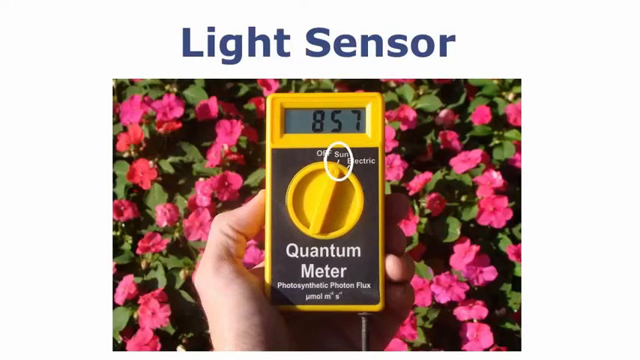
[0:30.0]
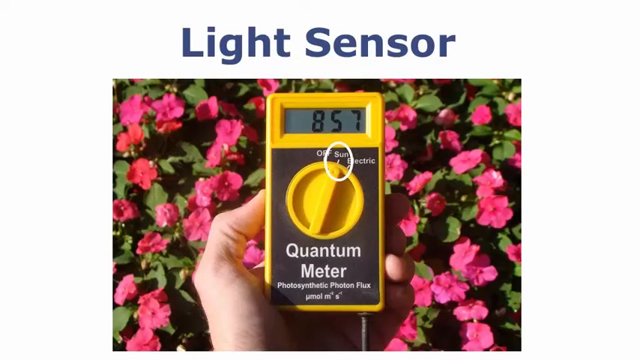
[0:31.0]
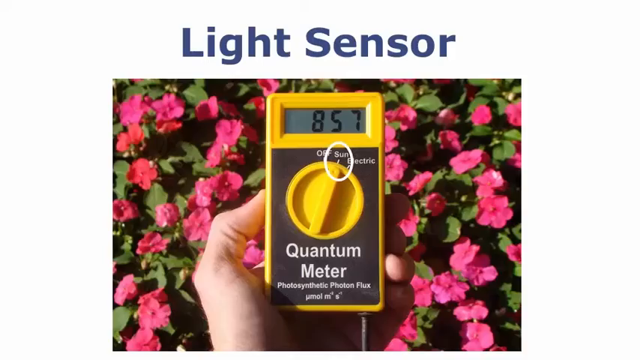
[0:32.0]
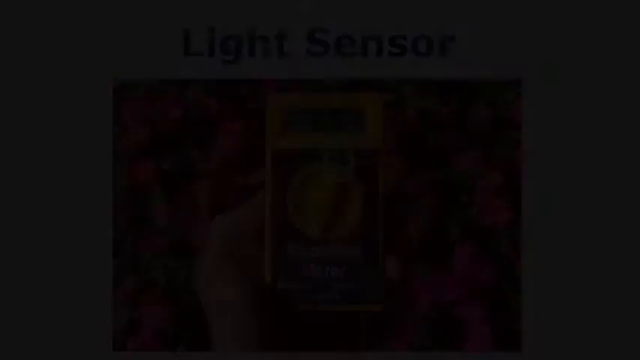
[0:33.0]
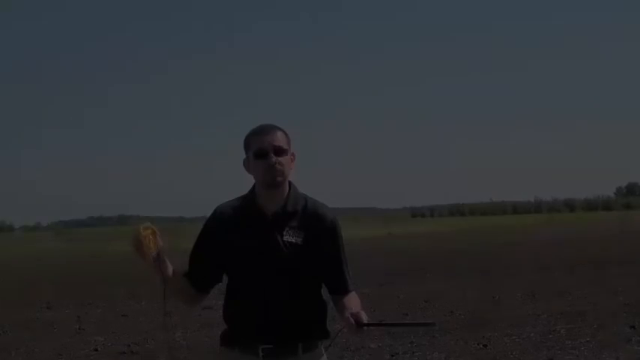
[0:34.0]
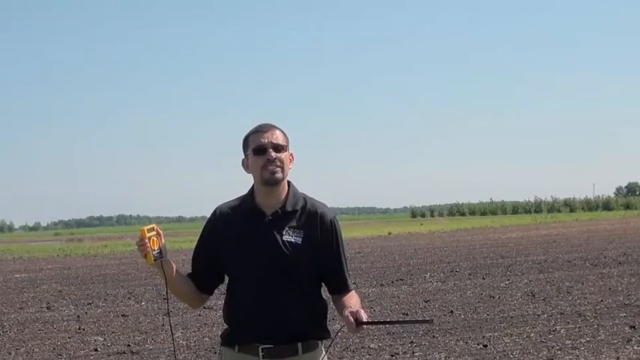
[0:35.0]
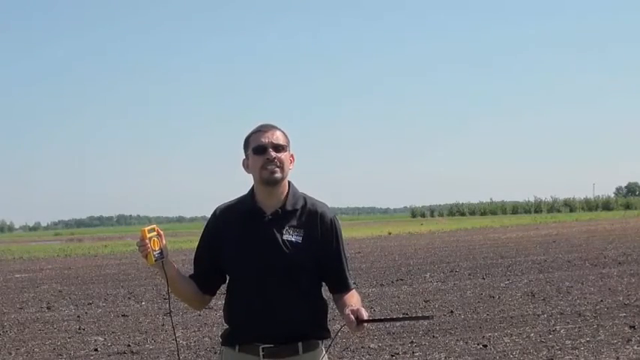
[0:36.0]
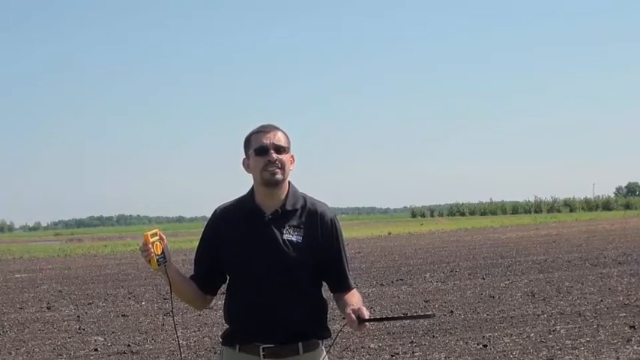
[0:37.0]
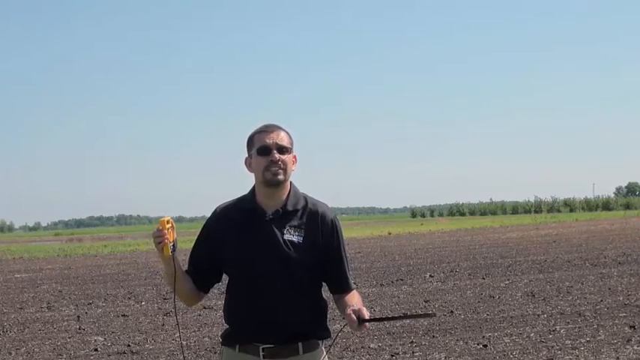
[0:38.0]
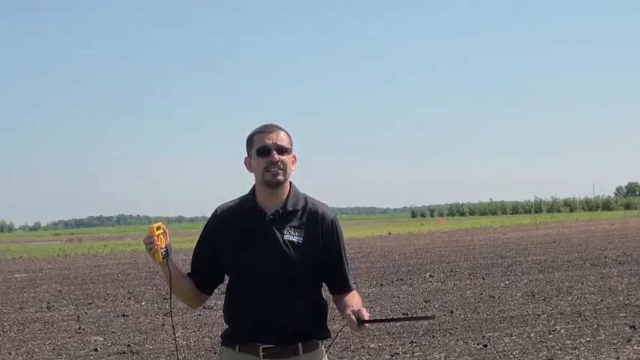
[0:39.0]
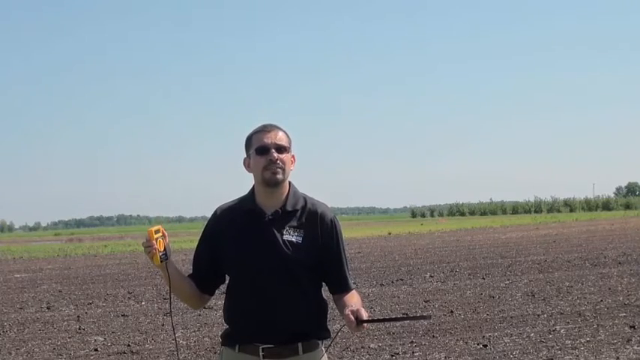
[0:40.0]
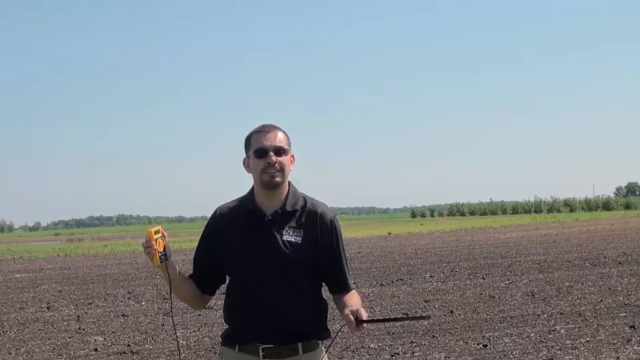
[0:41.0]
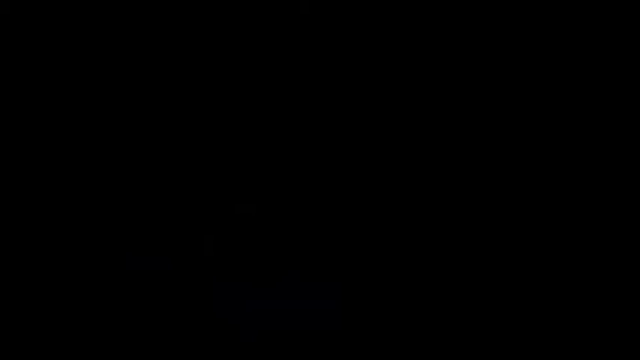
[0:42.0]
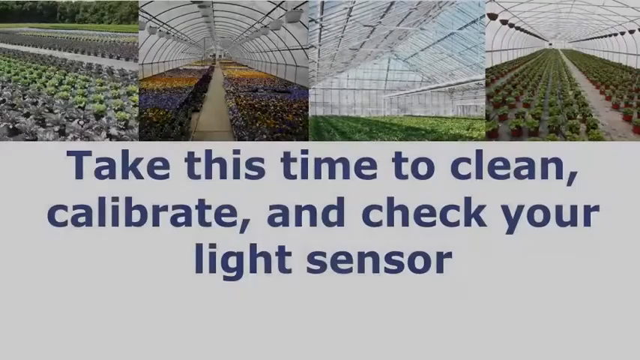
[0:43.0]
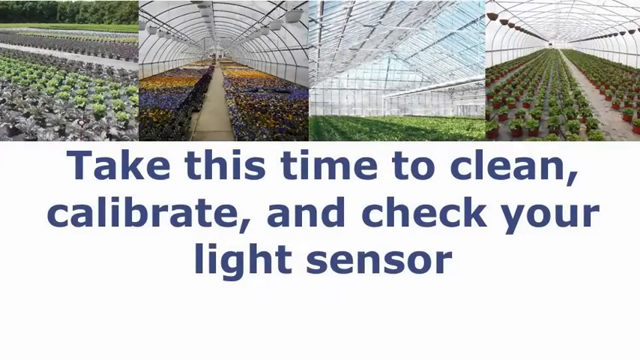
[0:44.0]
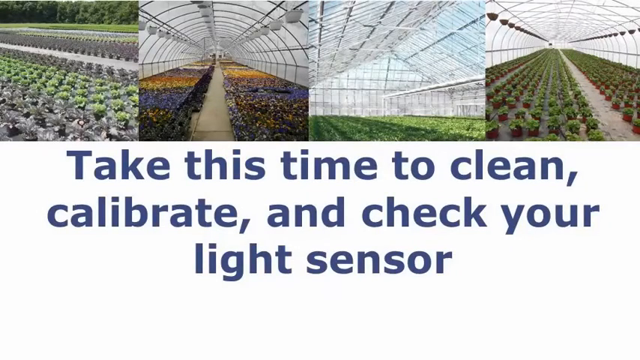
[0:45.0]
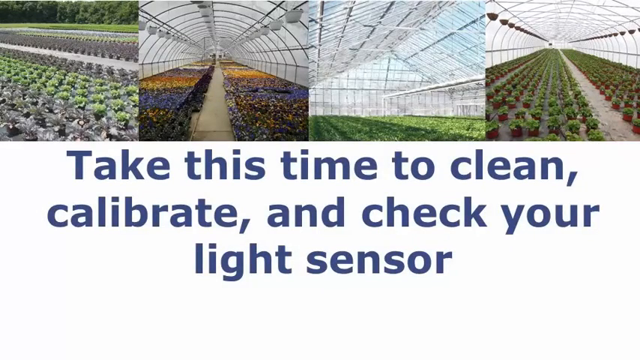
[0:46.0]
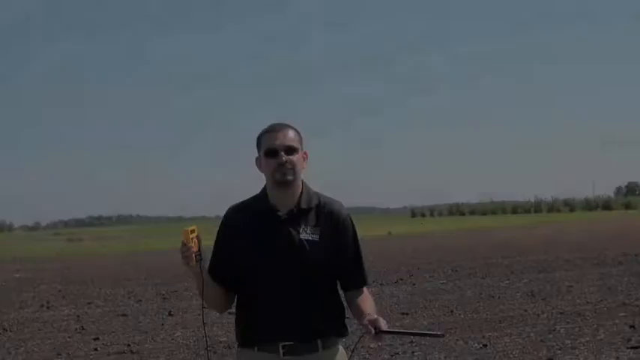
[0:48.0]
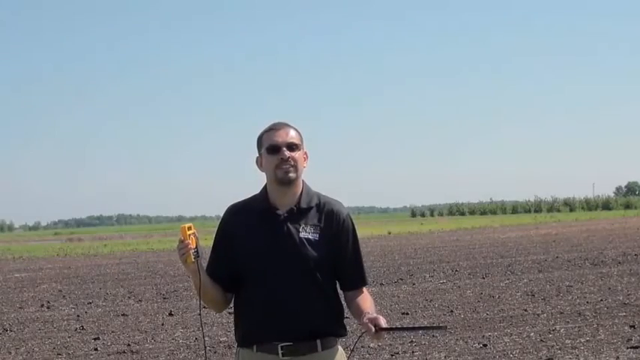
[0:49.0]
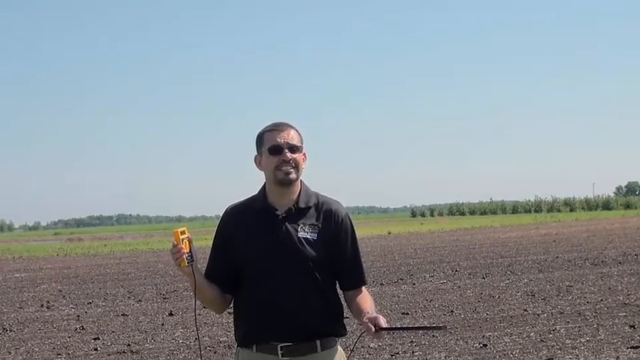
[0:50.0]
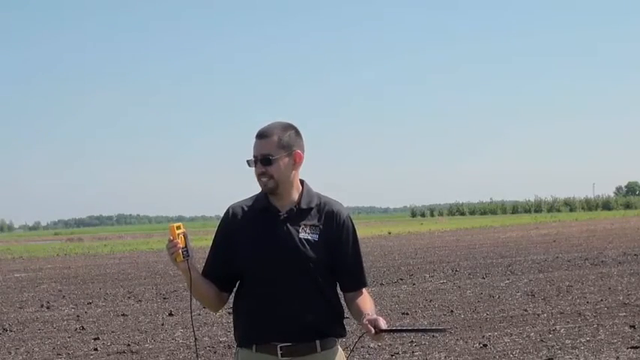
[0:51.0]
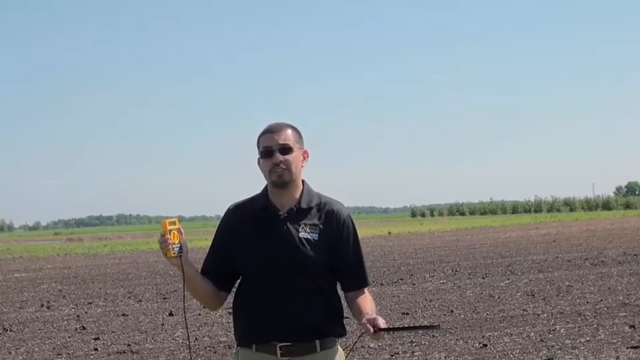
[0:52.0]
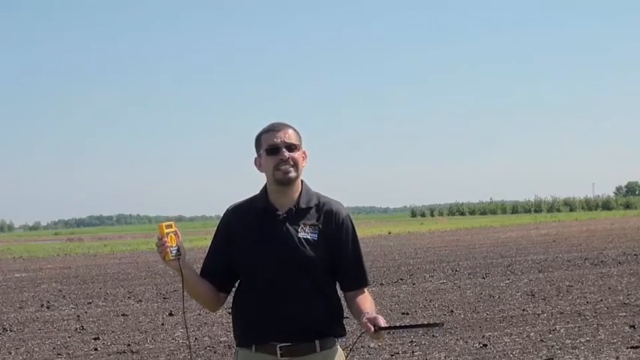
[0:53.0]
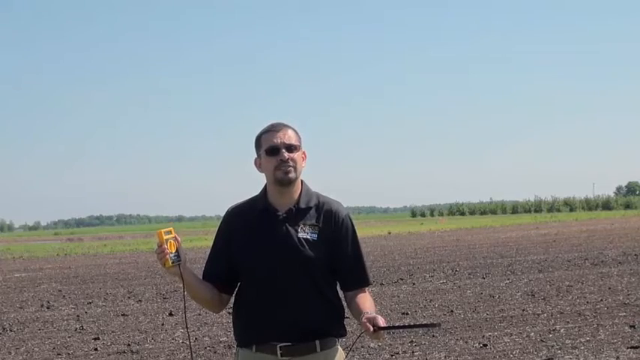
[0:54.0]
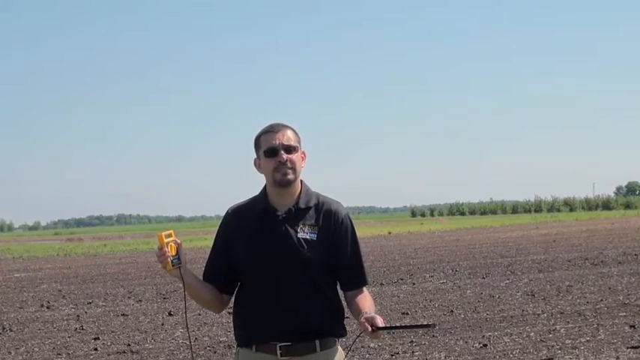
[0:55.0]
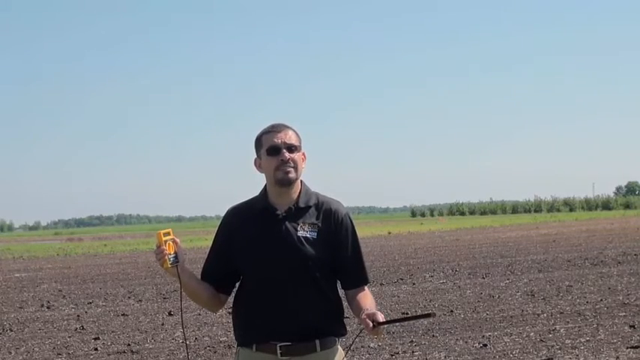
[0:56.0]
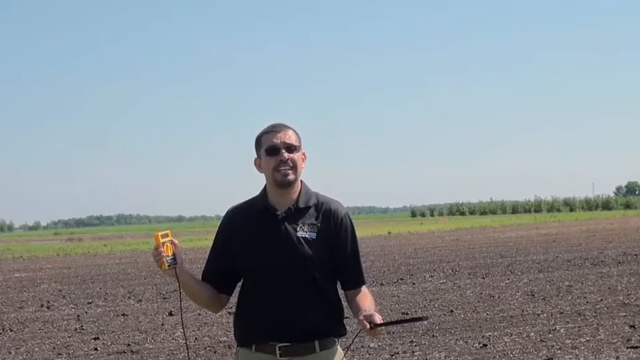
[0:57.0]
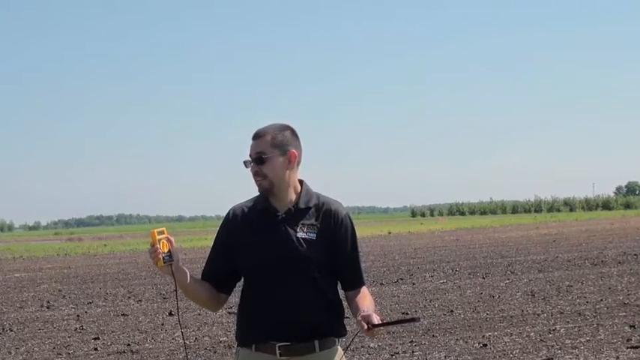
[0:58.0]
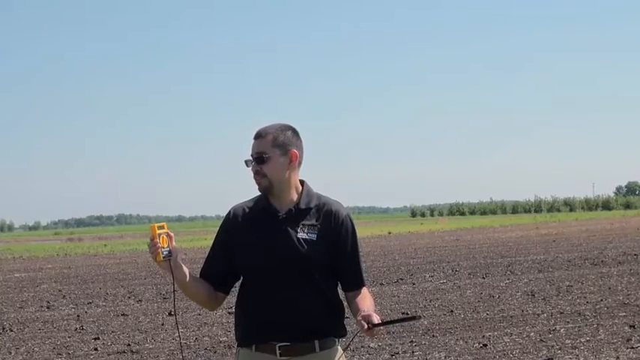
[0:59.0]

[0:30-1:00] A slide with a white background has blue lettering up top reading "light sensor." Underneath is a photograph of a white person's hand holding a yellow meter. A gray screen in the top center shows the black numbers "857," and below it white lettering on a gray background reads "off sun electric," with a white circle around the sun part. A round yellow knob is in the center. White lettering at the bottom reads "quantum meter," below that "photosynthetic proton flux," with more white lettering underneath. Pink flowers and green leaves are all around the meter in the person's hand. Next, a white man with short brown hair, brown sunglasses and a brown goatee holds a black wand in his left hand and the yellow meter with a black cord in his right. Behind him are blue sky, green trees and green grass in the distance. He stands on a brown dirt field, talking to the camera, wearing a black collared short-sleeved shirt with a white patch on the left chest, a brown belt and cream-colored pants. The next slide has a white section at the bottom with blue lettering reading "take this time to clean, calibrate, and check your light sensor," along with four pictures: green trees with green and gray rows of plants on the left; orange, purple, red and yellow plants under a circular gray greenhouse covering with a gray patch in the middle; a green patch at the bottom under a triangular glass roof with white above; and a gray patch in the middle with green pots on the left and right under a rounded white roof.